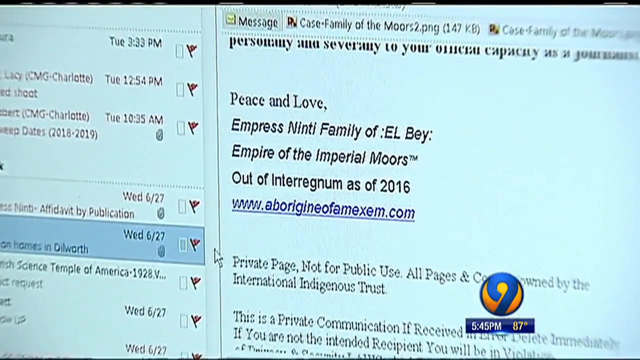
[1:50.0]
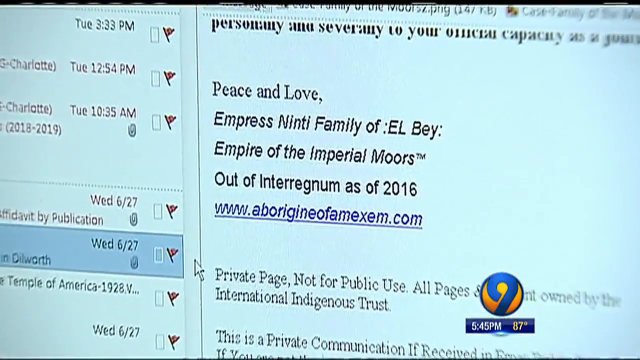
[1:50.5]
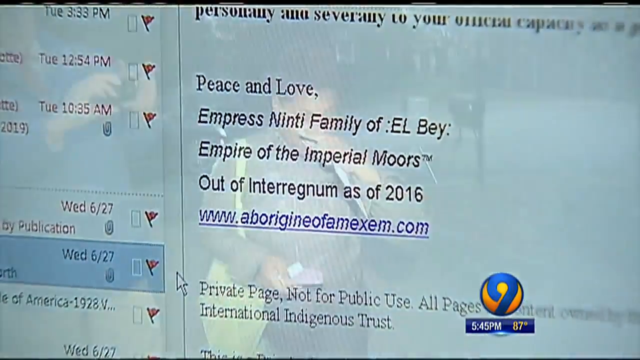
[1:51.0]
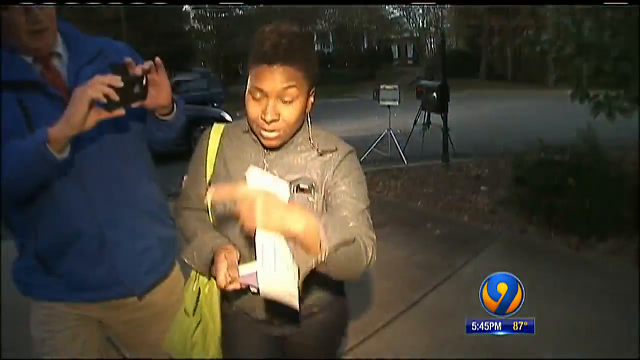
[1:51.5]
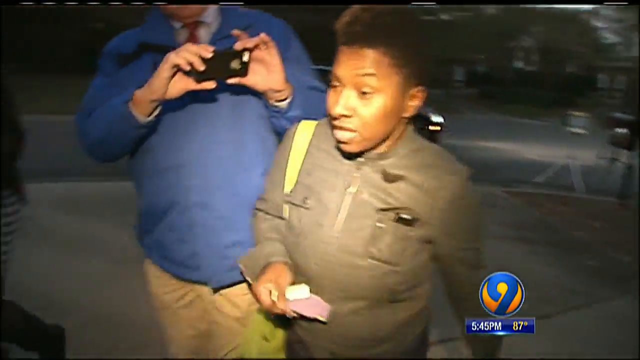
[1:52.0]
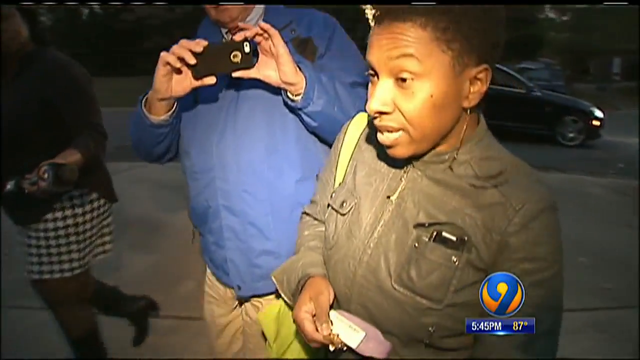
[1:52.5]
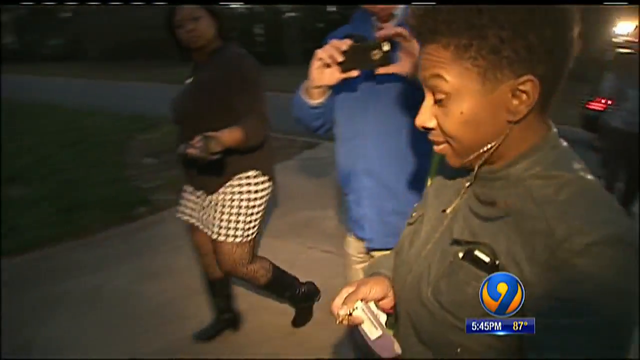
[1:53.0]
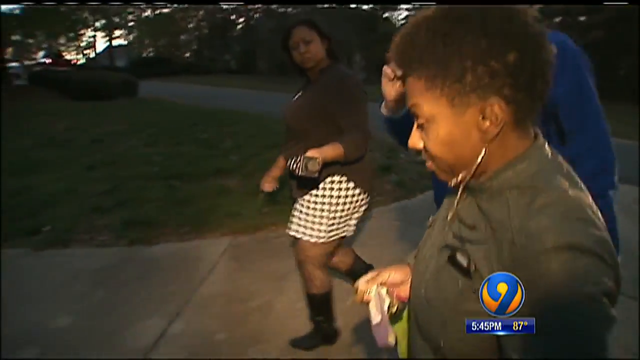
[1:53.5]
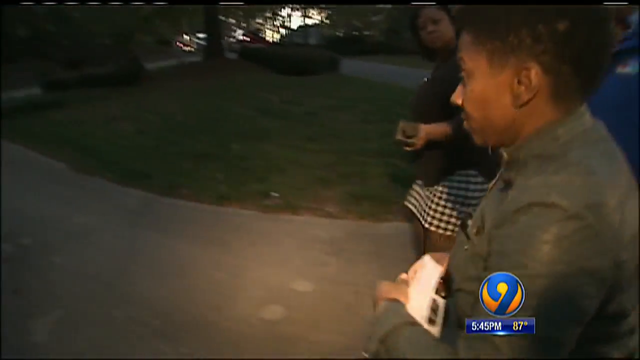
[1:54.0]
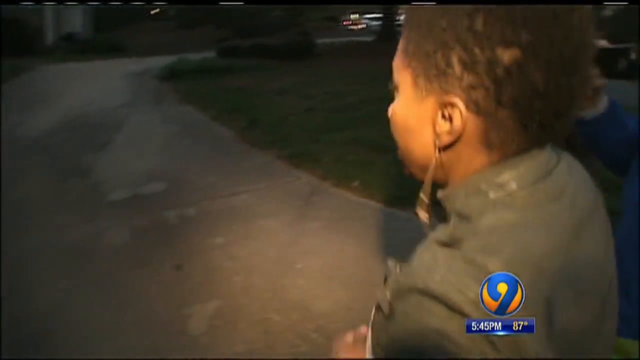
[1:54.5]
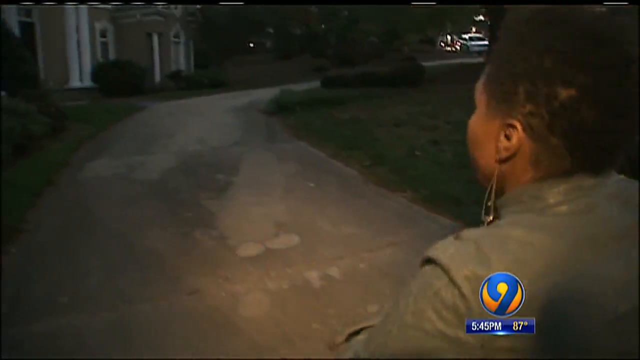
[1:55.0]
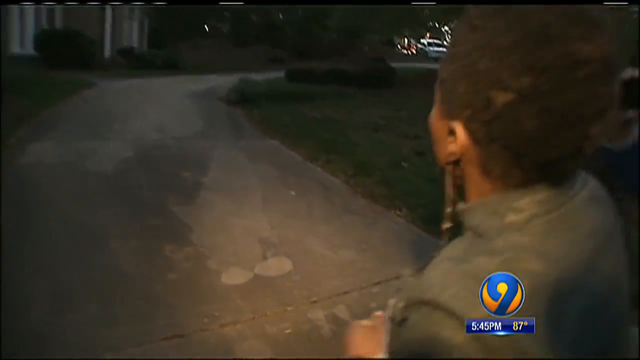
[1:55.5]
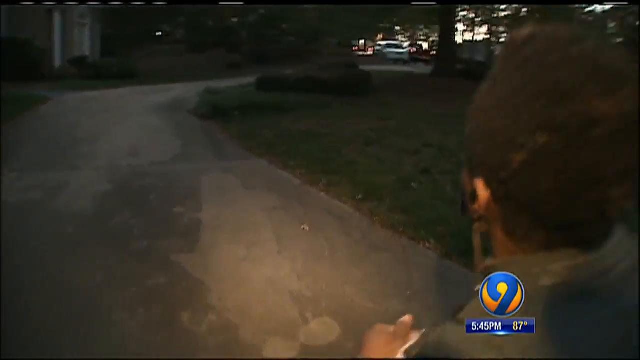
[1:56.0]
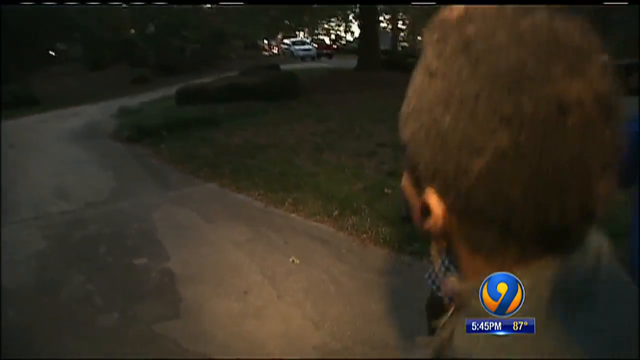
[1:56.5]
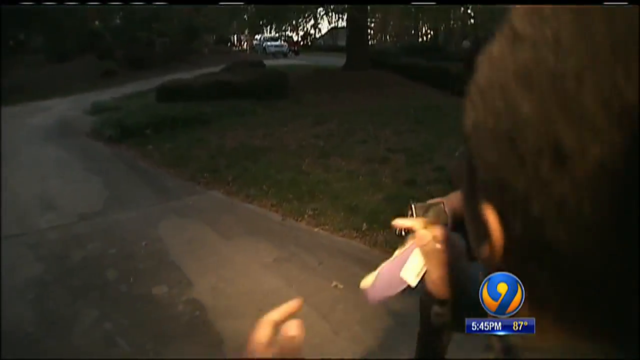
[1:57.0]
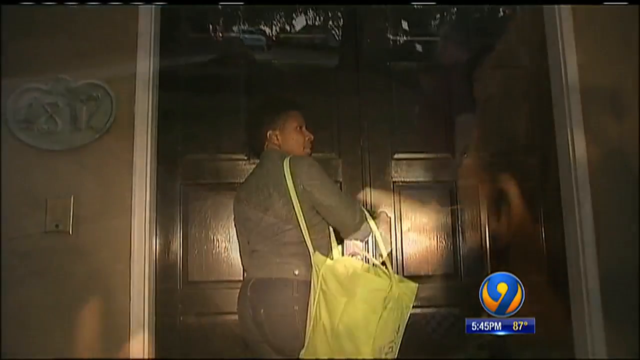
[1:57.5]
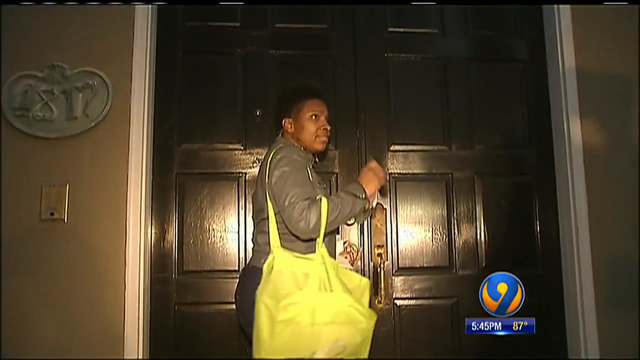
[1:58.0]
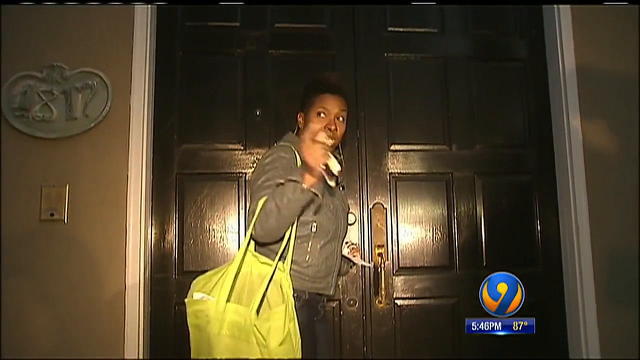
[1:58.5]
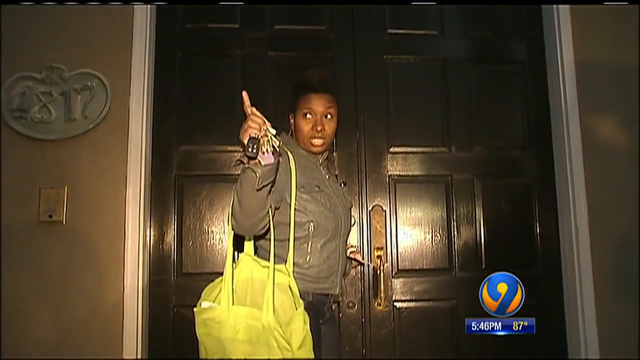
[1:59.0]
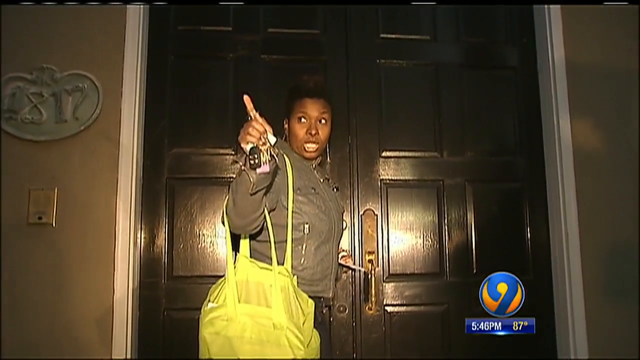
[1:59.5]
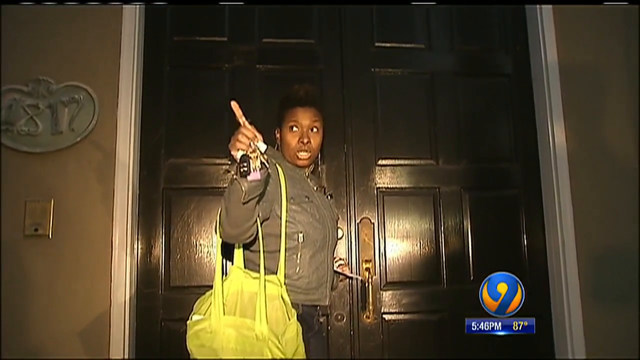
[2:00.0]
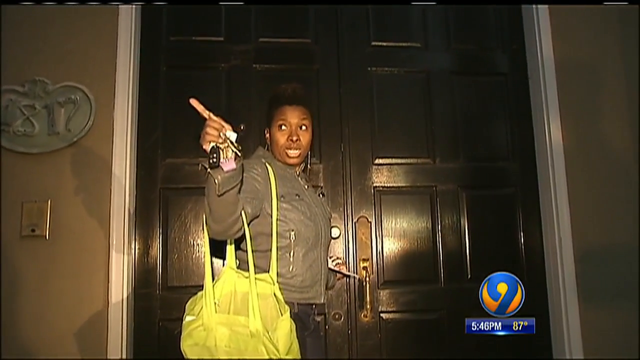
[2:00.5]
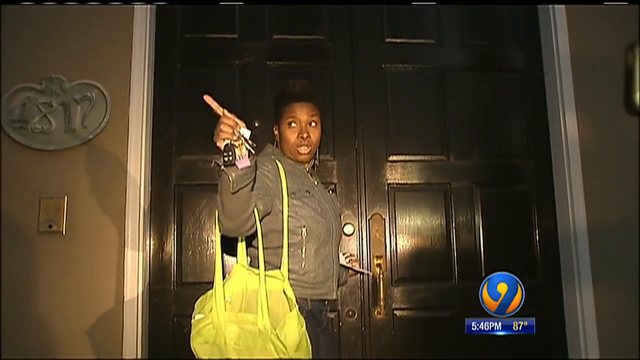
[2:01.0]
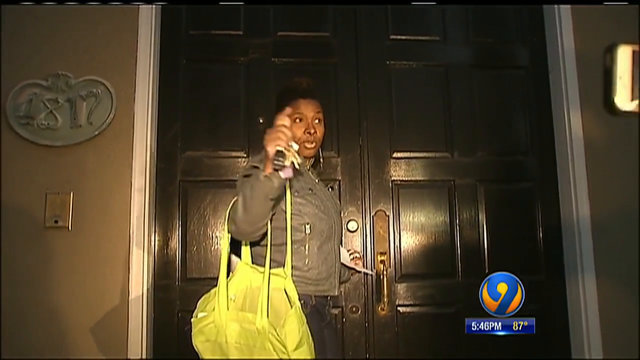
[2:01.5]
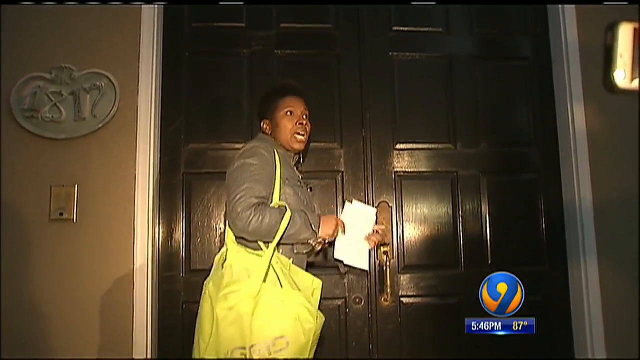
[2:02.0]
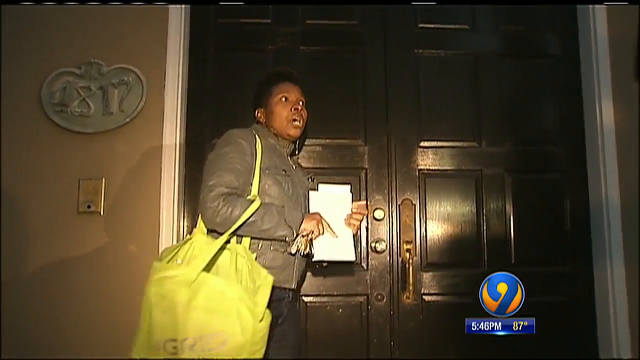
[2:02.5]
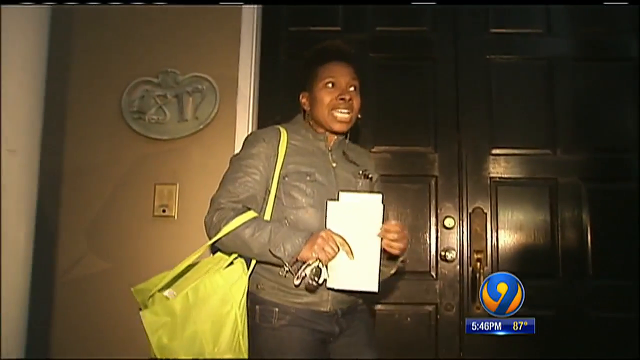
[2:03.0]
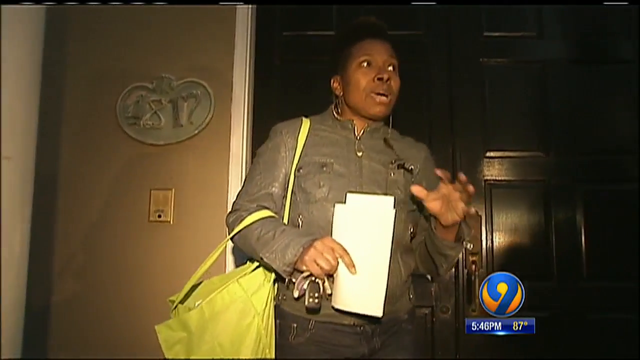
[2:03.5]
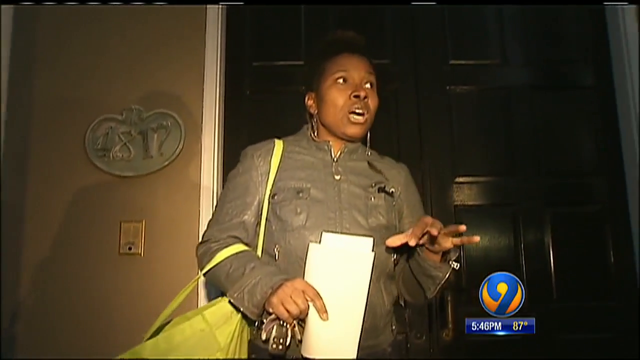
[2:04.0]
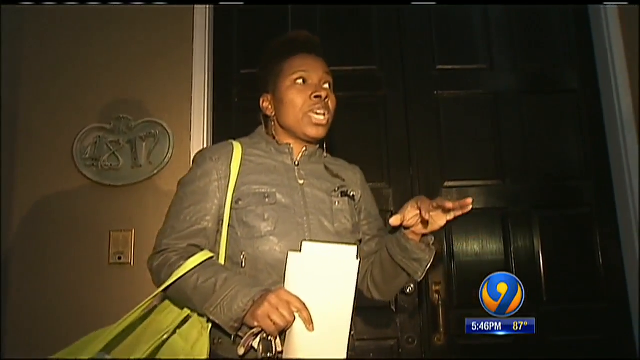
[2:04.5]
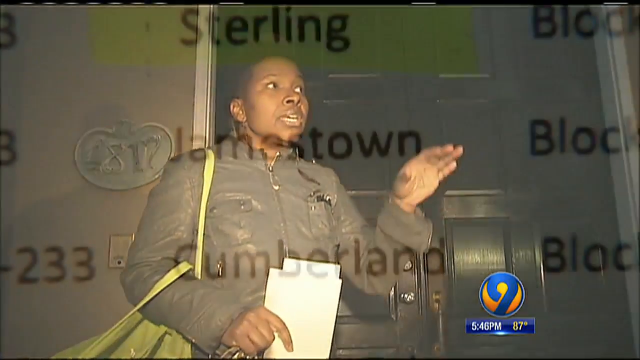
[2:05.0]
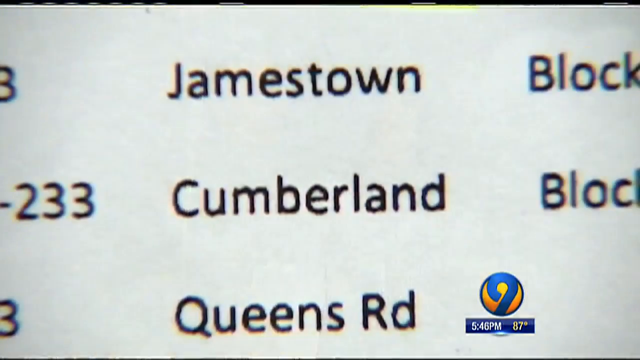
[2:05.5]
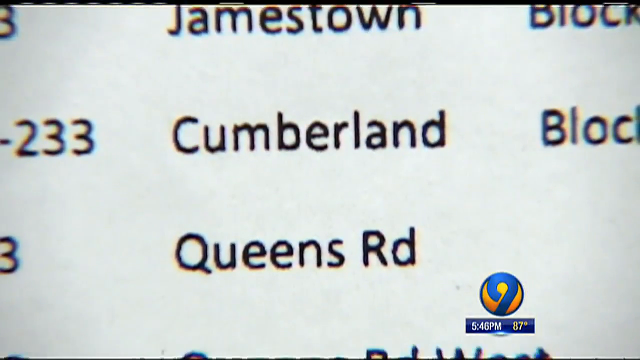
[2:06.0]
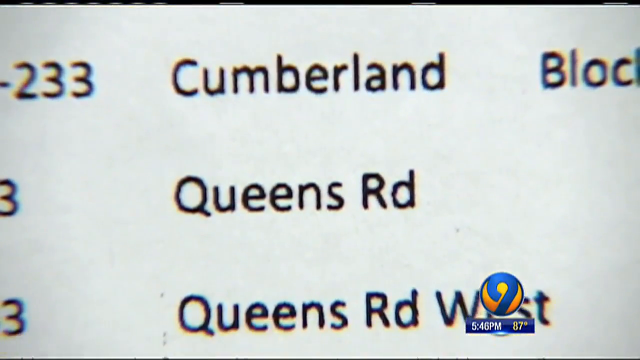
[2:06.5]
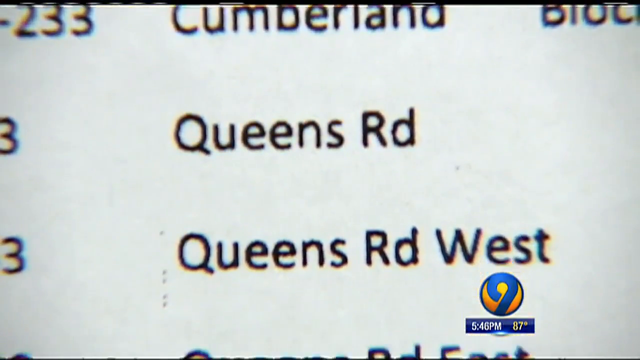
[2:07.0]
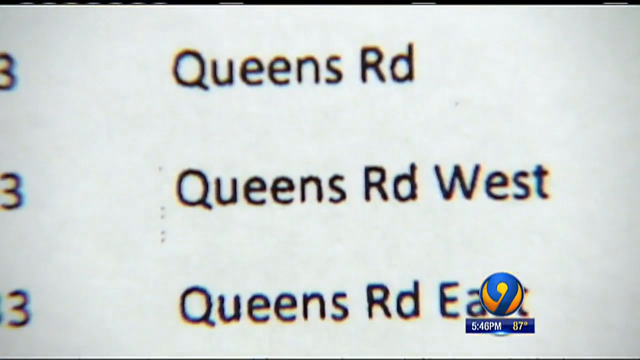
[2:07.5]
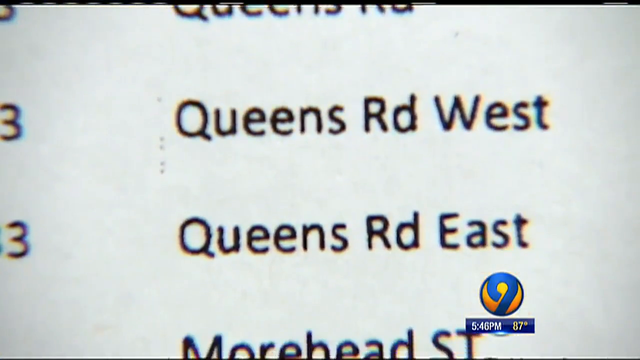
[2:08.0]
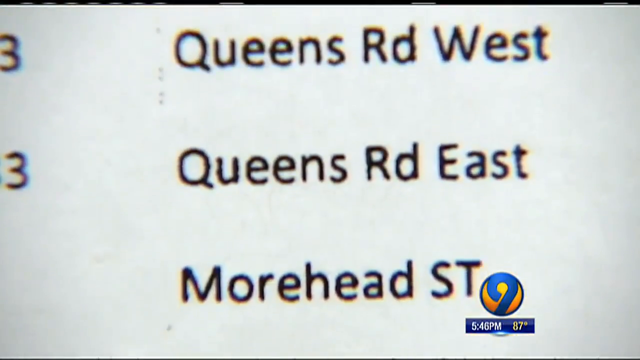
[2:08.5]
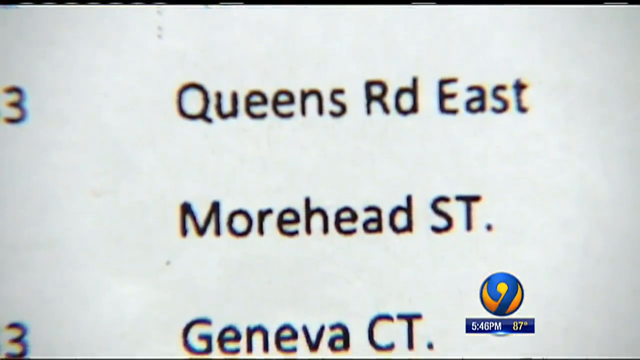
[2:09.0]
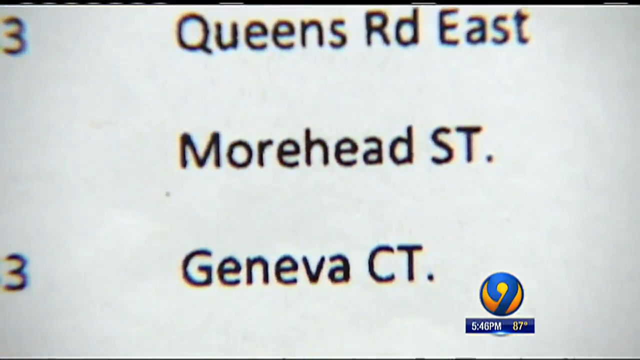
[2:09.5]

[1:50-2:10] A response is shown, signed "Peace and Love, Empress Ninty, Family of Elbe, Empire of the Imperial Moors, Out of Interregnum as of 2016, www.aboriginefamexem.com," which looks to be an email. Next, the reporters approach a woman who is walking away; she apparently does not want to be interviewed and is kind of pointing away. Then a list of many addresses is shown, possibly the addresses the letters were sent to.